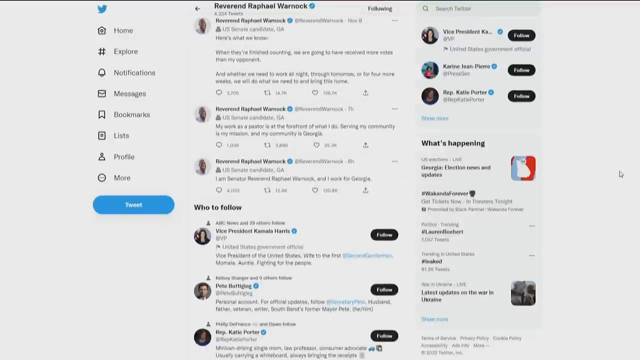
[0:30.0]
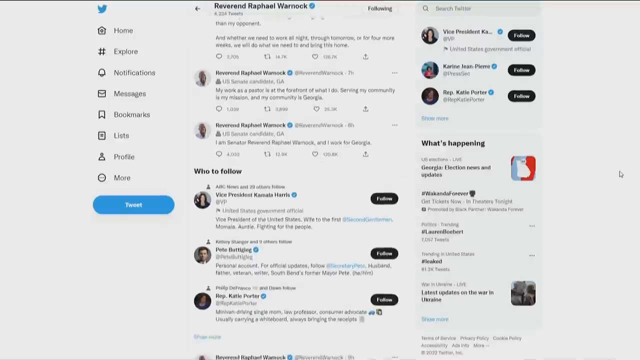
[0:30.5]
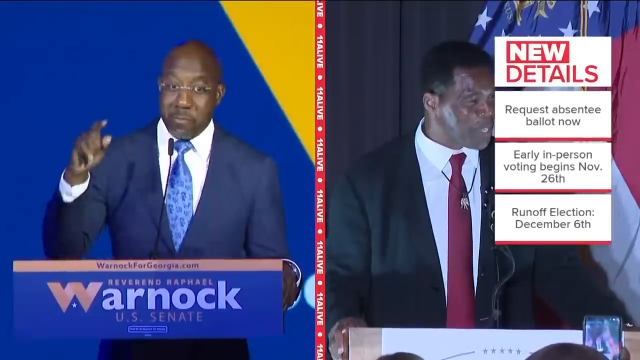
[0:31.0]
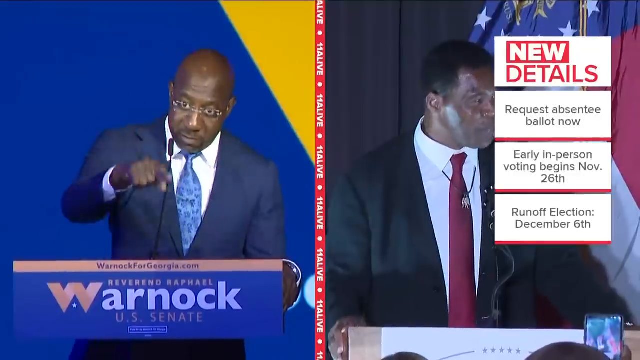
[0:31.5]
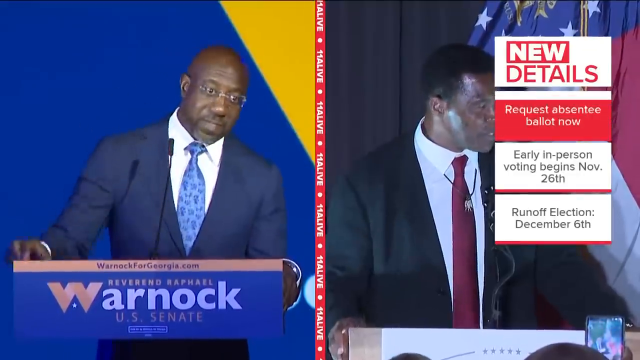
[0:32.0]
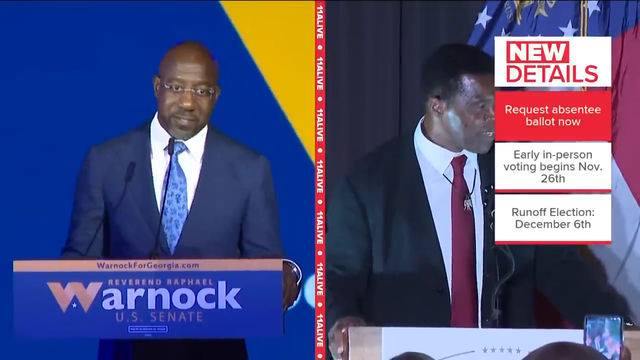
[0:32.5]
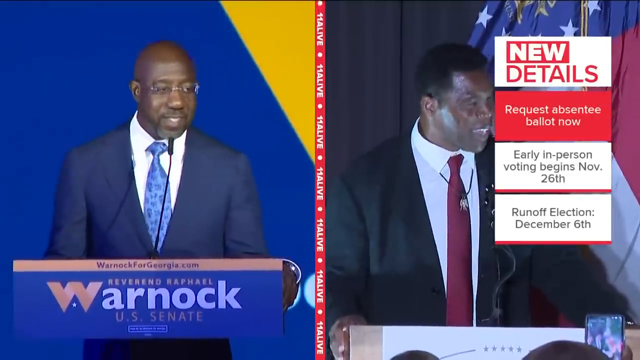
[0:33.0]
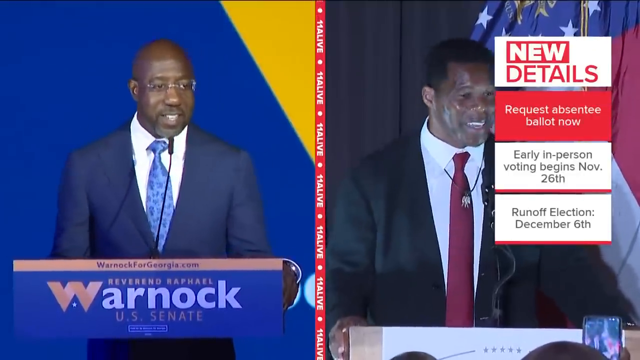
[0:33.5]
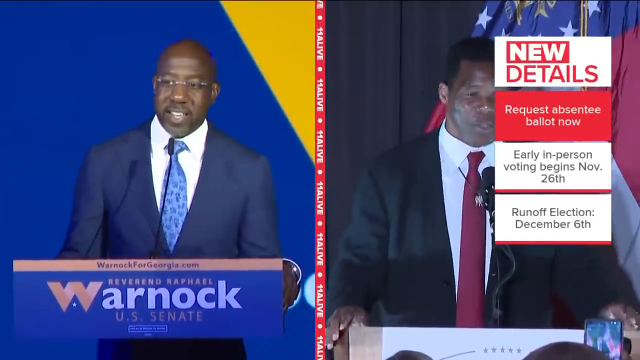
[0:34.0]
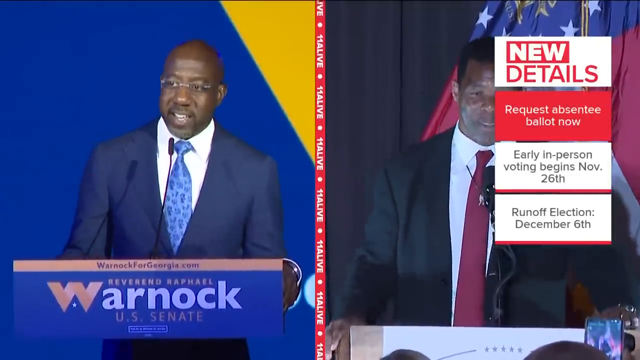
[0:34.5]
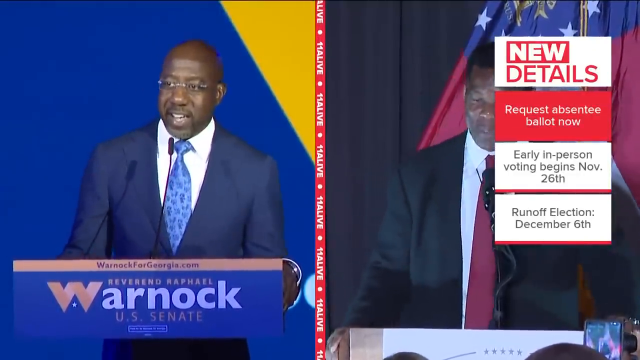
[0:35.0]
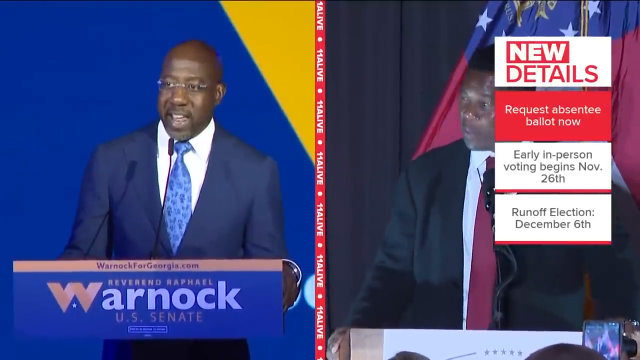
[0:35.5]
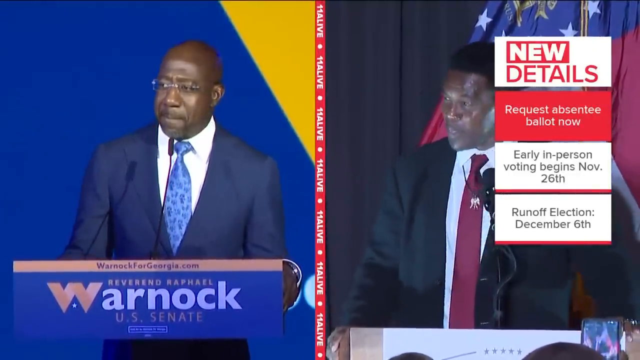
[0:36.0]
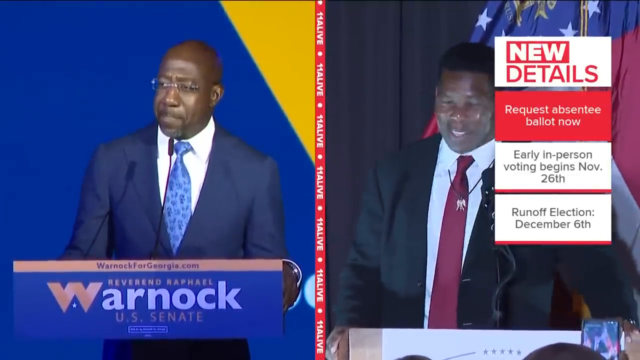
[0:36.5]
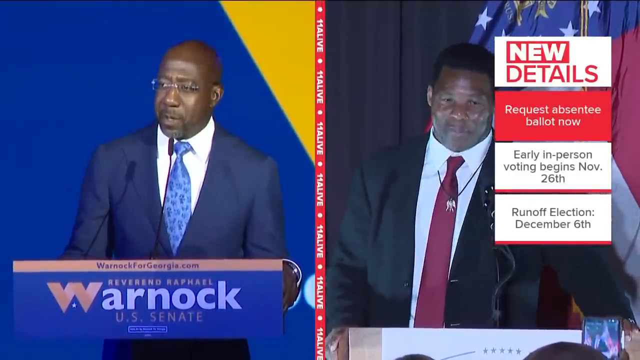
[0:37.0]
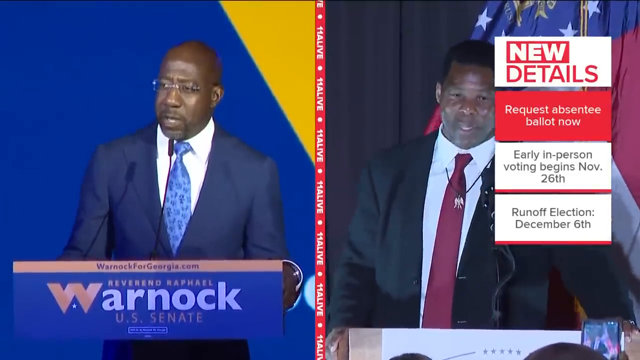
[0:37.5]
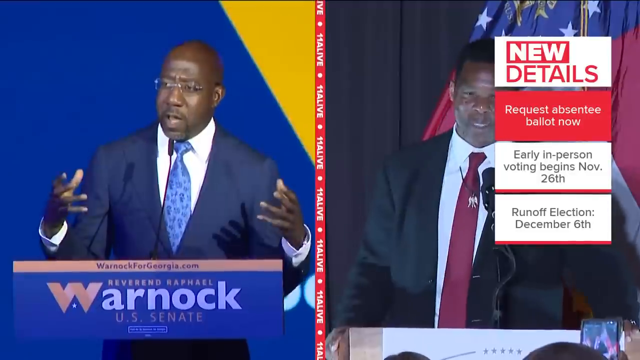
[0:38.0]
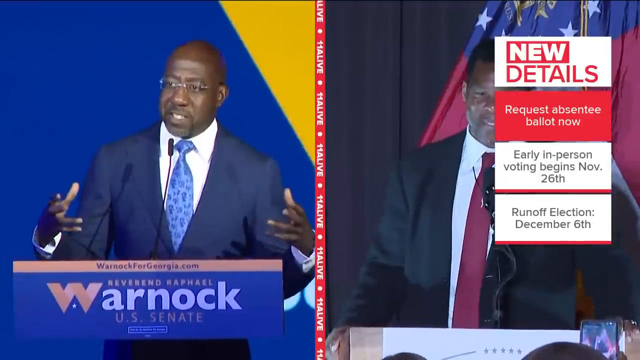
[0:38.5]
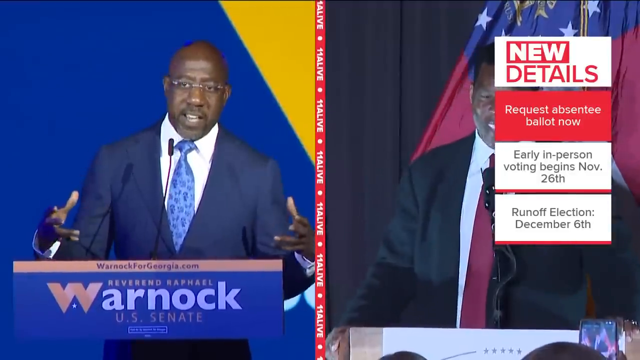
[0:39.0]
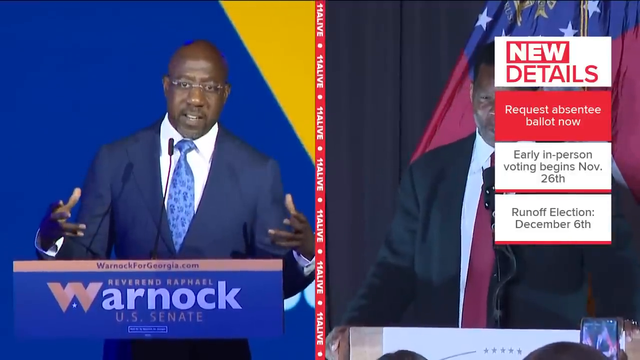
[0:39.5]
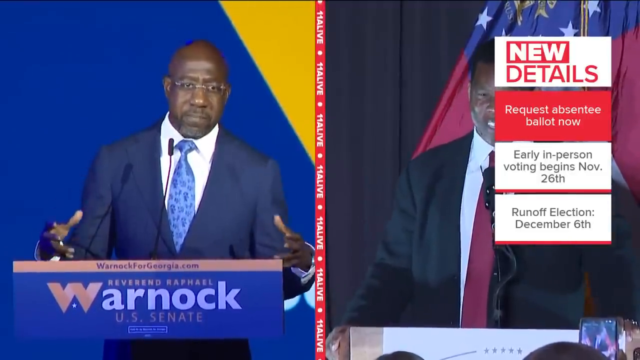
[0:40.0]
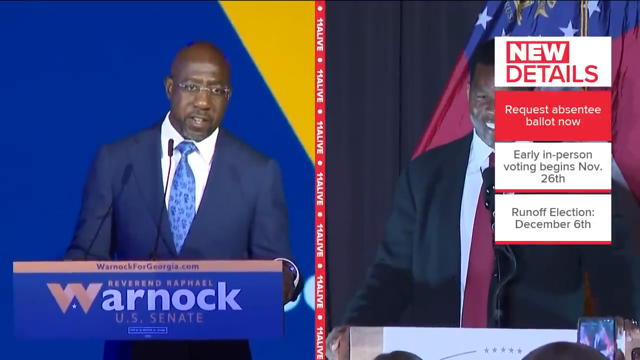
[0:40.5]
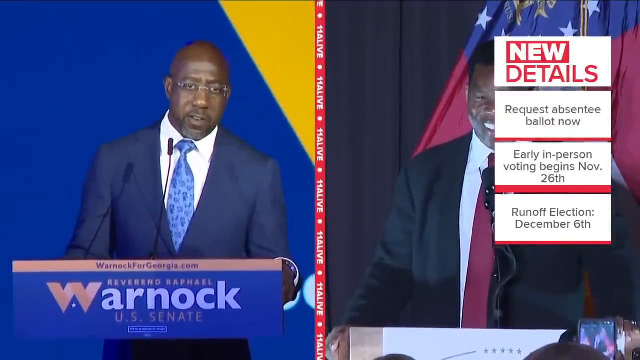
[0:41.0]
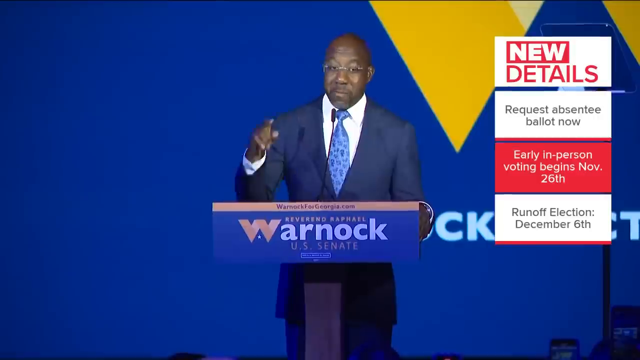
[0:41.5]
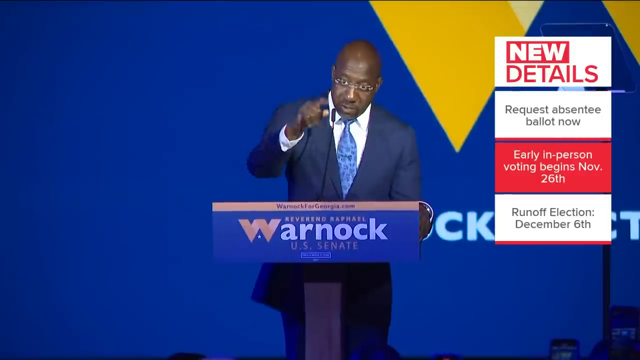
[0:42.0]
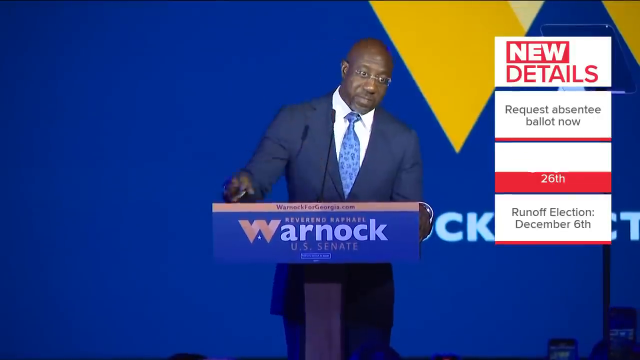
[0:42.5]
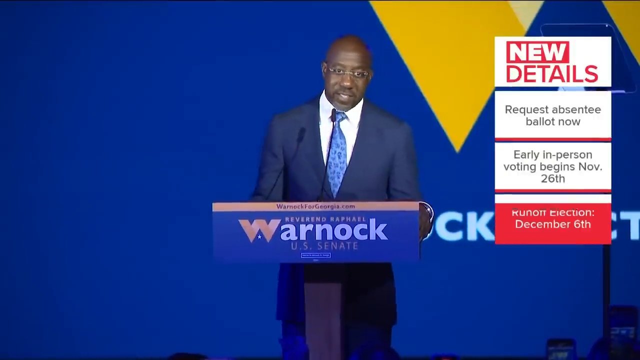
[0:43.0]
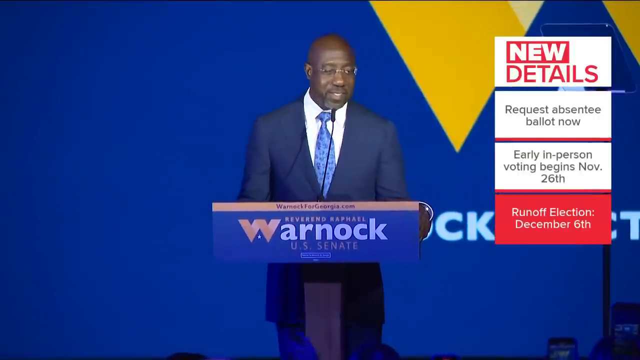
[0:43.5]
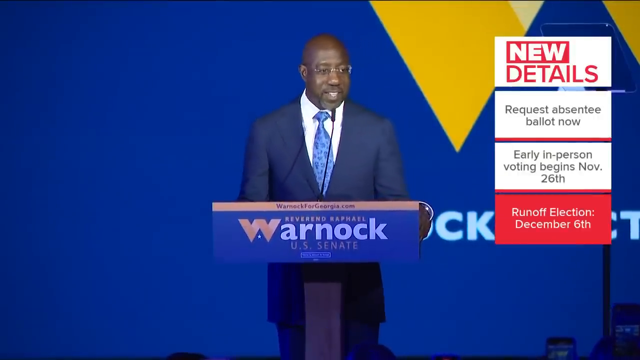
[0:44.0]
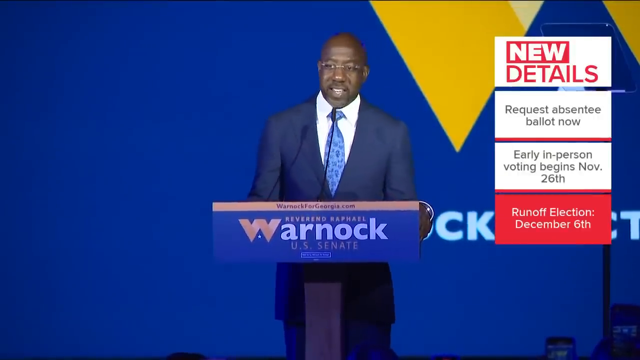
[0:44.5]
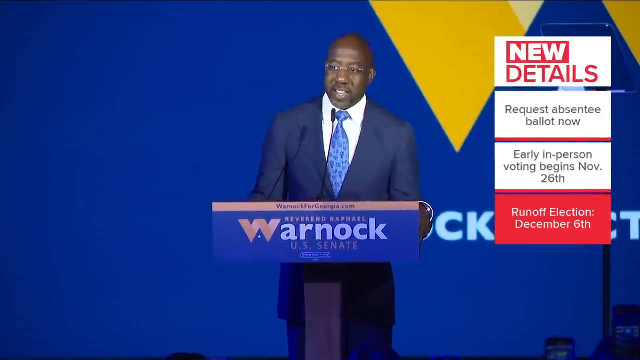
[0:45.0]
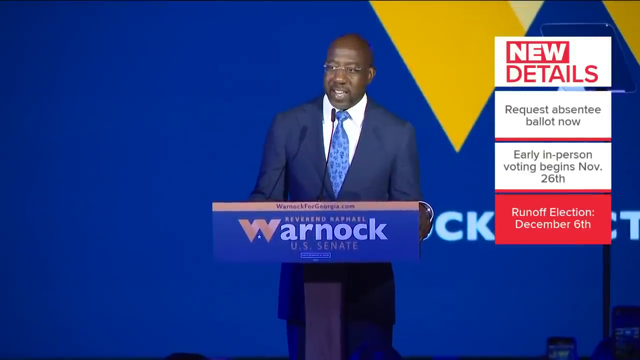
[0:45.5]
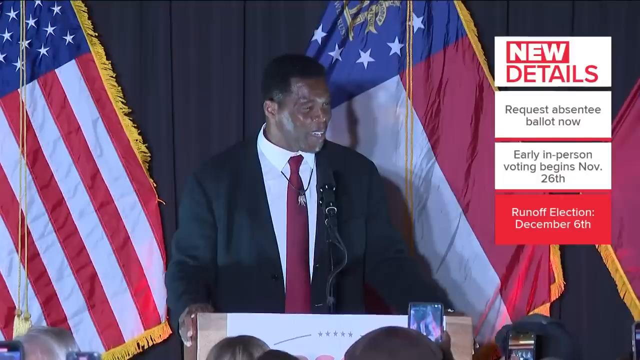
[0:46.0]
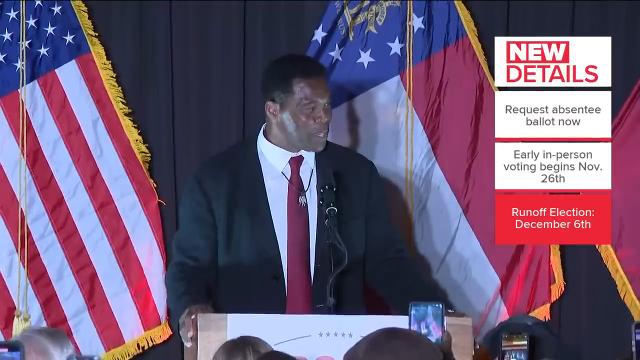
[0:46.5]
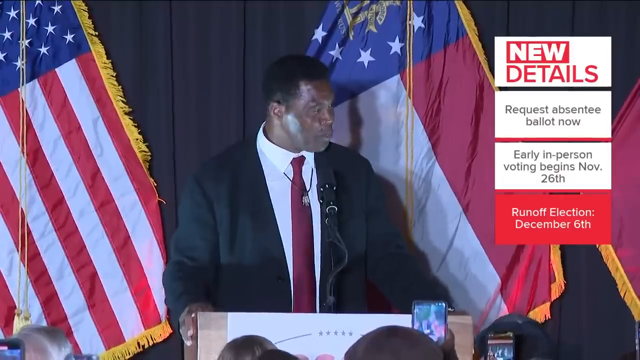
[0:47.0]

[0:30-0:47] A split screen shows Warnock on the left and Herschel Walker on the right, both speaking on a stage at a podium and both wearing business suits. A banner in the top right corner reads "New details request absentee ballot now" in a red box, and two white boxes read "early in-person voting begins November 26th" and "runoff election is December 6th". Between the two candidates in the middle of the split screen is a red banner reading "Live 11", the news channel. The full frame then shows Warnock at a podium, followed by Herschel Walker, also at a podium, with American flags behind him; he is standing on a stage addressing his supporters or a crowd.